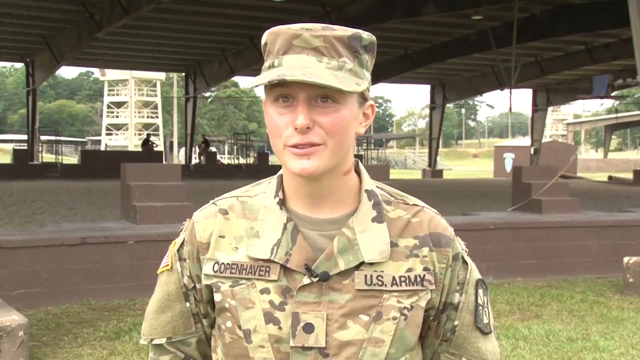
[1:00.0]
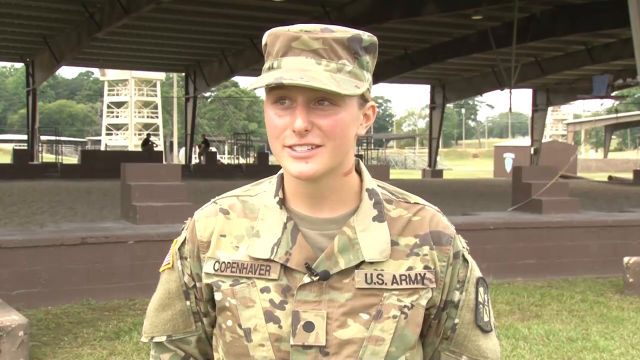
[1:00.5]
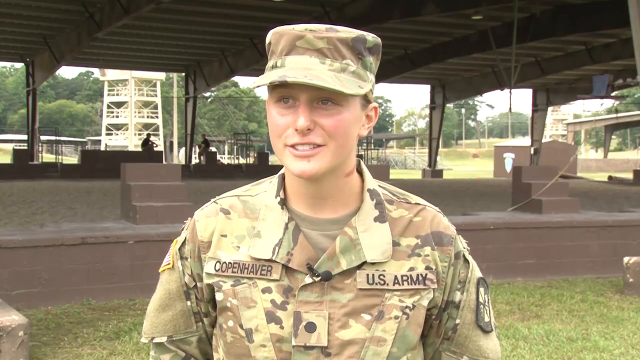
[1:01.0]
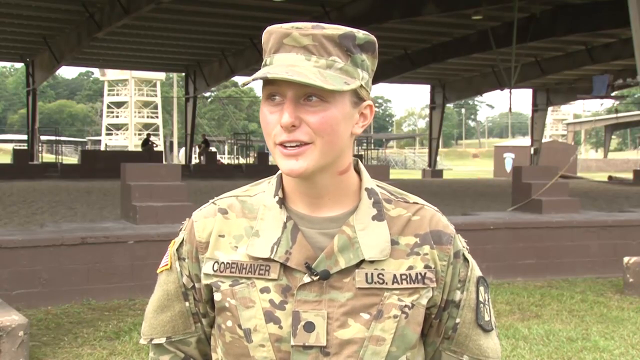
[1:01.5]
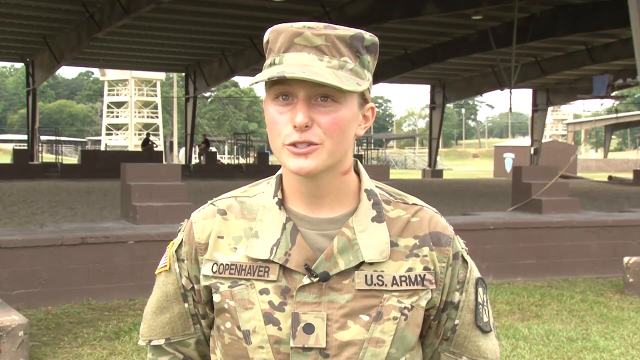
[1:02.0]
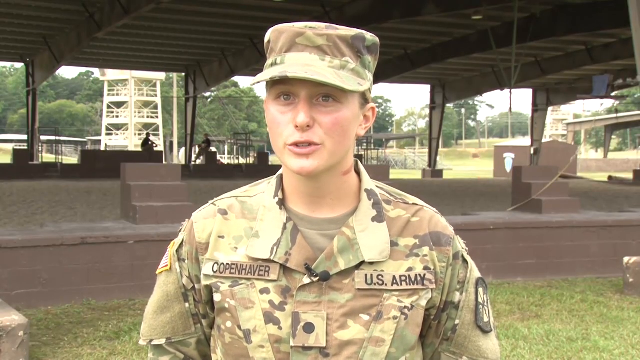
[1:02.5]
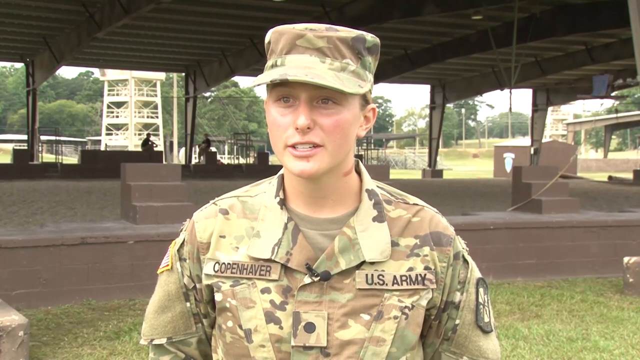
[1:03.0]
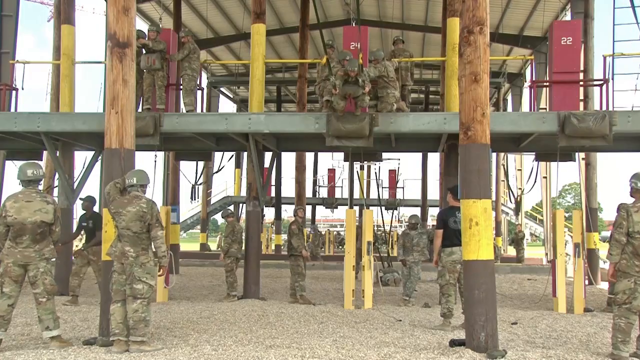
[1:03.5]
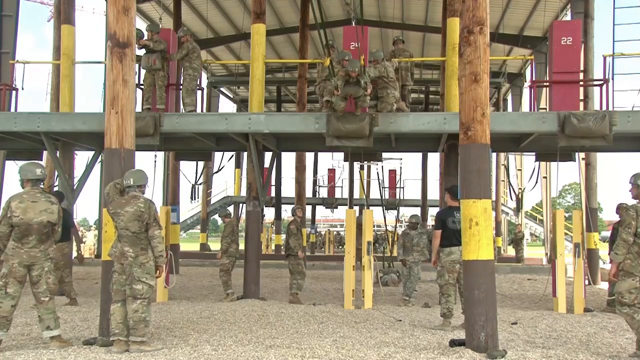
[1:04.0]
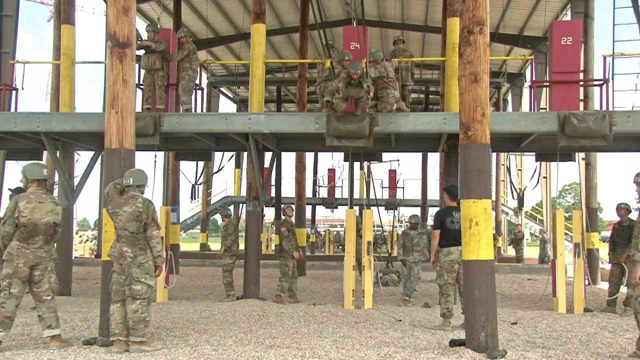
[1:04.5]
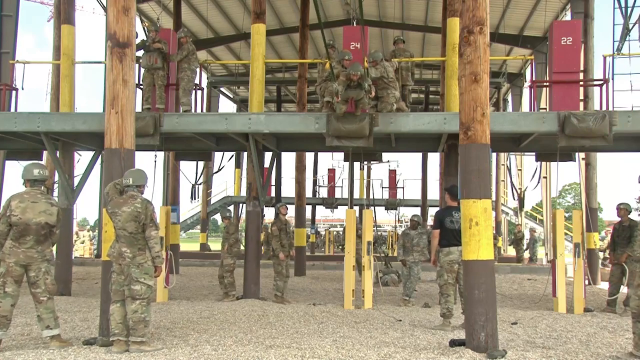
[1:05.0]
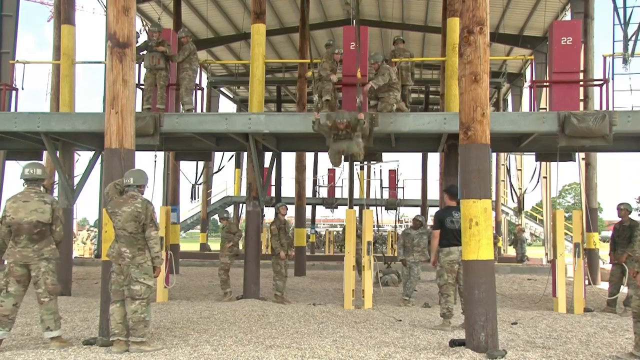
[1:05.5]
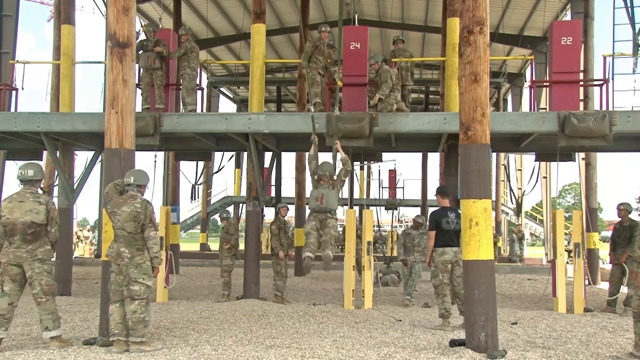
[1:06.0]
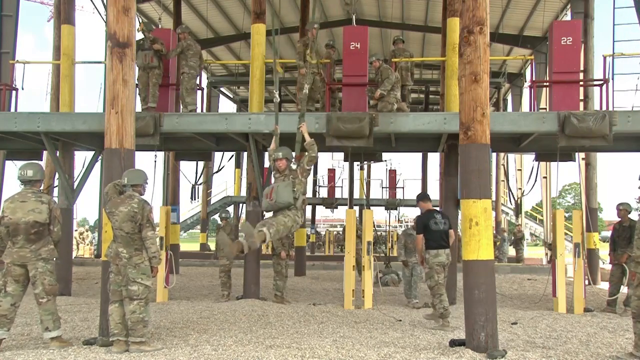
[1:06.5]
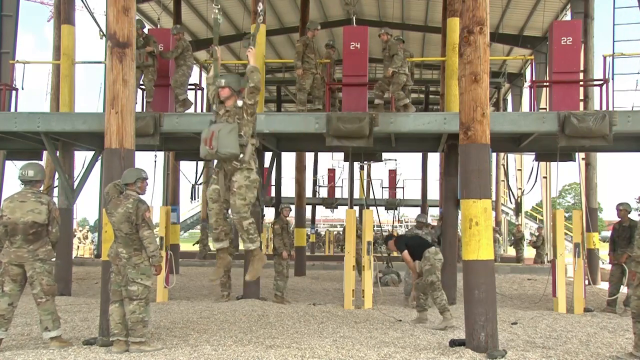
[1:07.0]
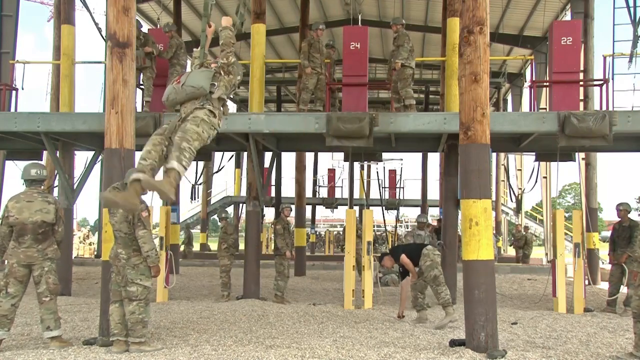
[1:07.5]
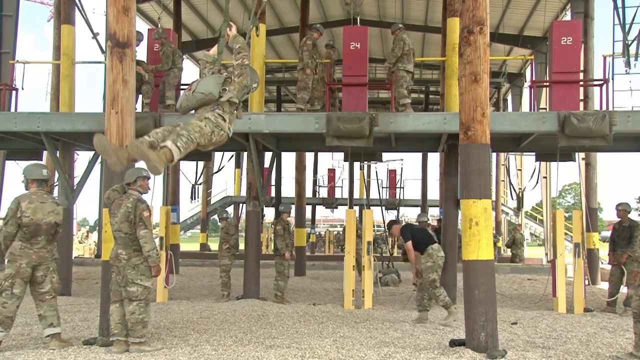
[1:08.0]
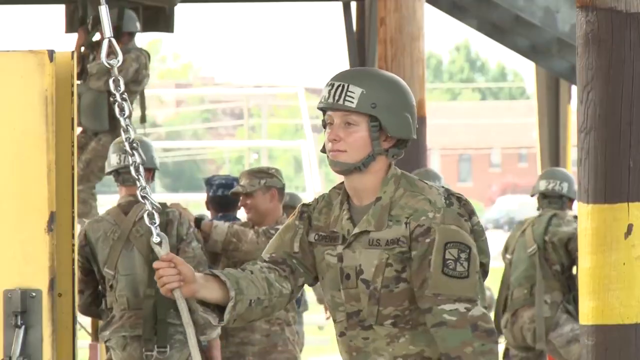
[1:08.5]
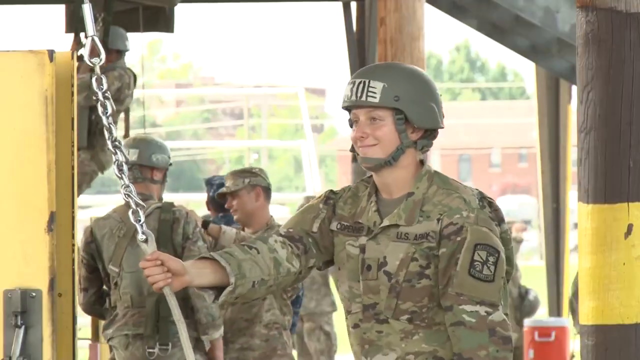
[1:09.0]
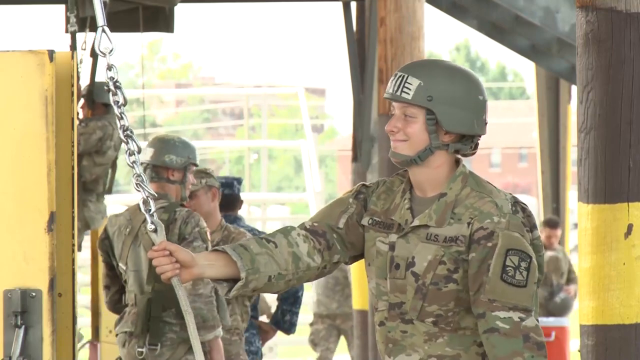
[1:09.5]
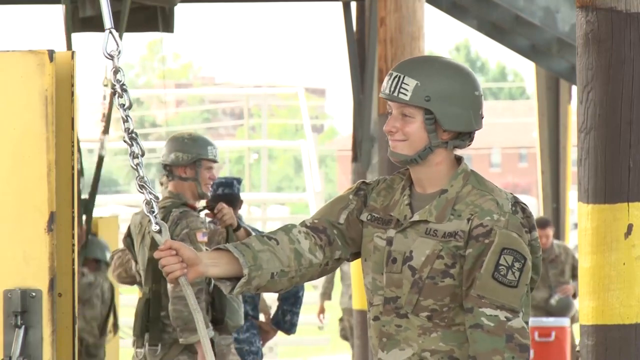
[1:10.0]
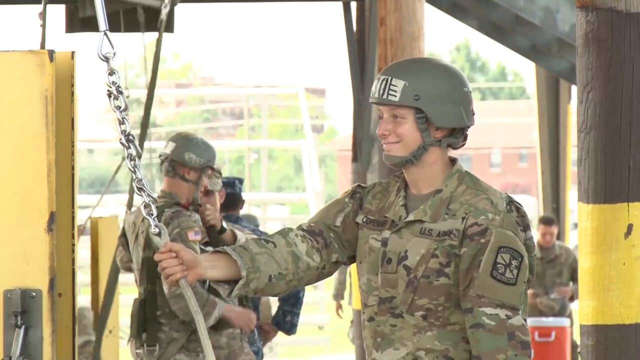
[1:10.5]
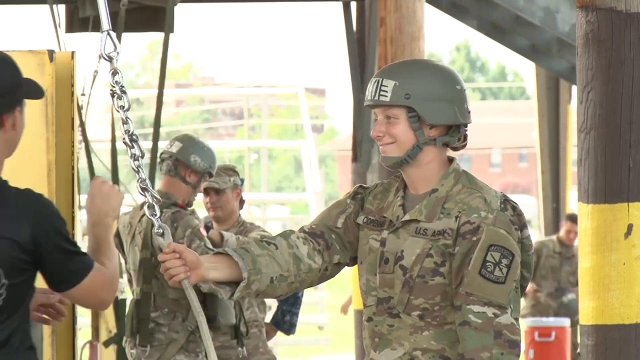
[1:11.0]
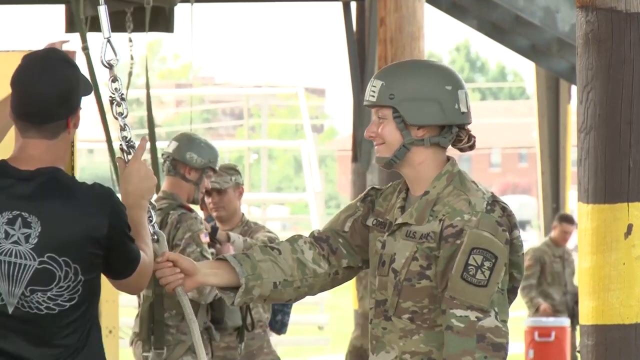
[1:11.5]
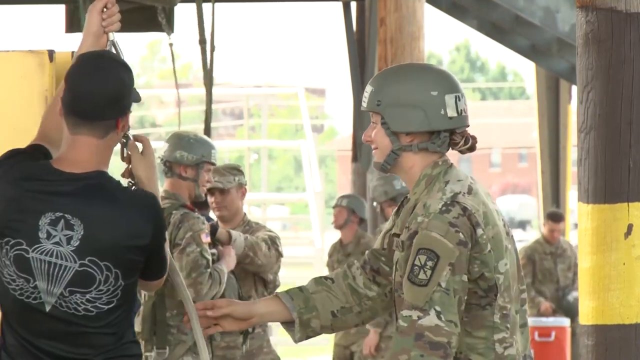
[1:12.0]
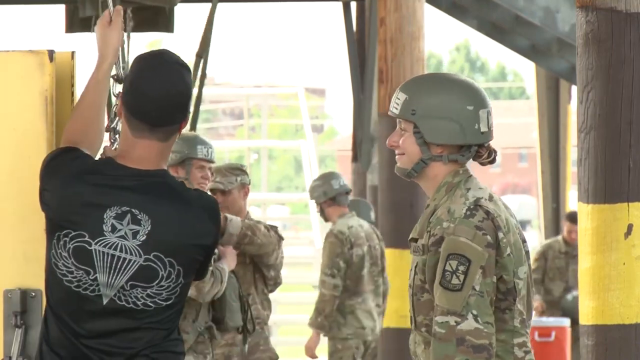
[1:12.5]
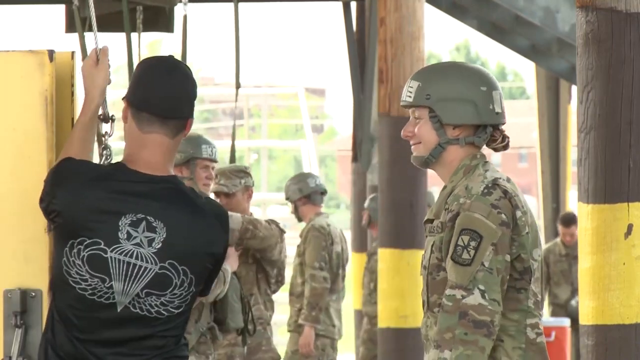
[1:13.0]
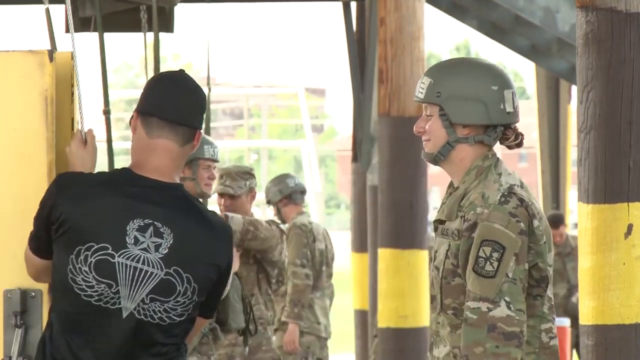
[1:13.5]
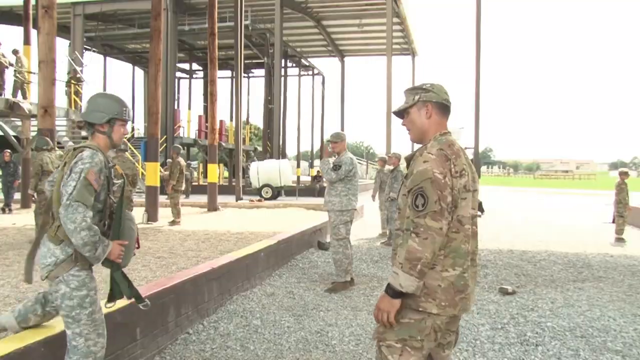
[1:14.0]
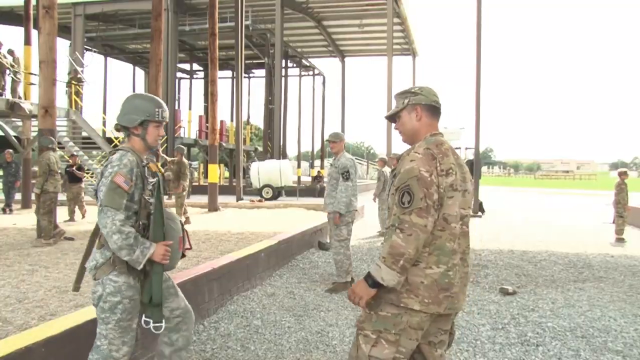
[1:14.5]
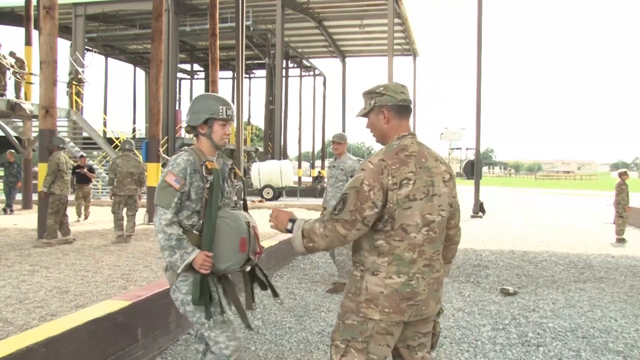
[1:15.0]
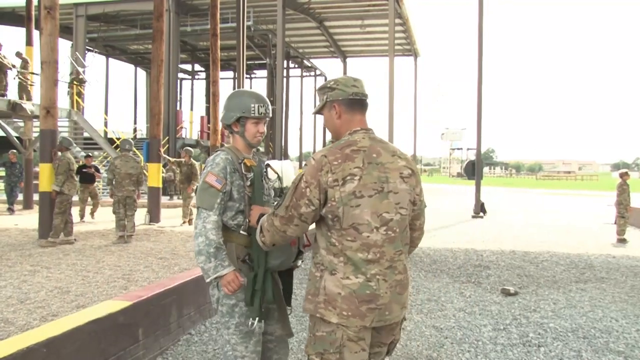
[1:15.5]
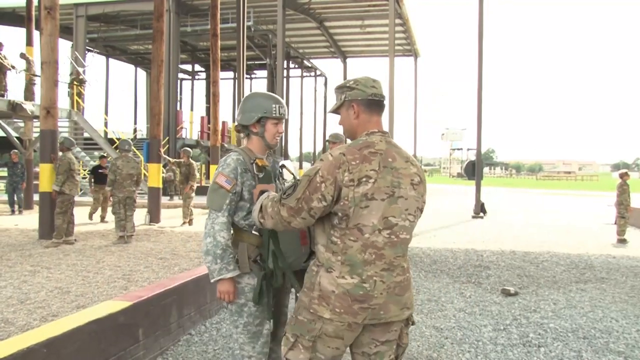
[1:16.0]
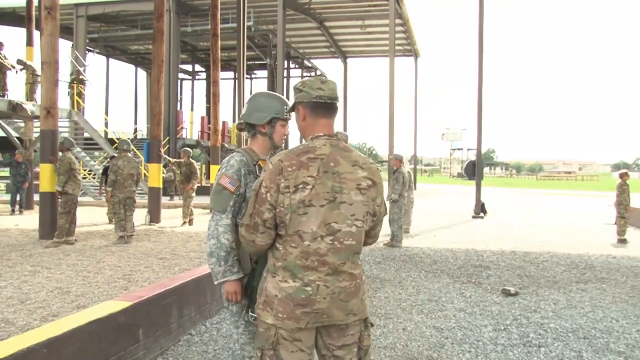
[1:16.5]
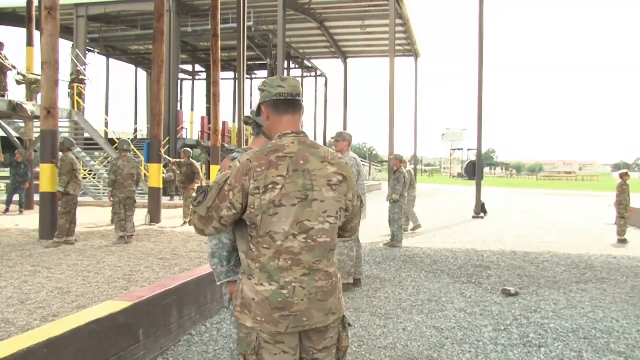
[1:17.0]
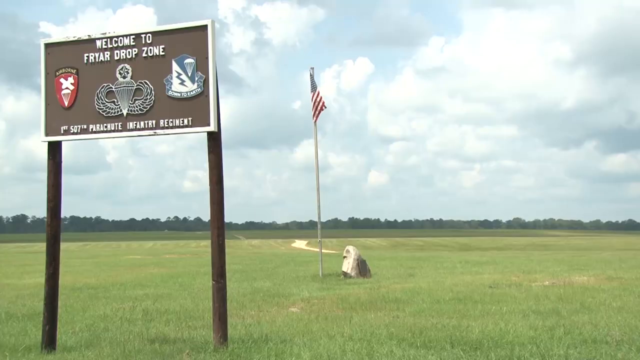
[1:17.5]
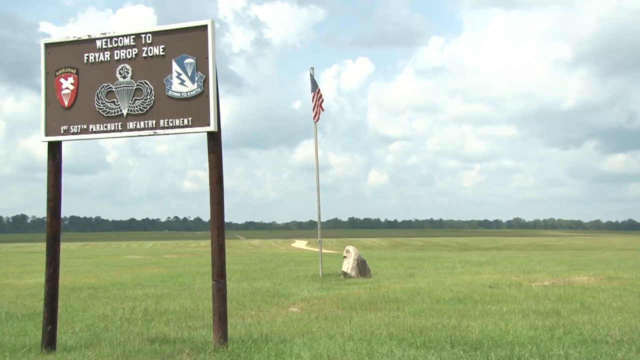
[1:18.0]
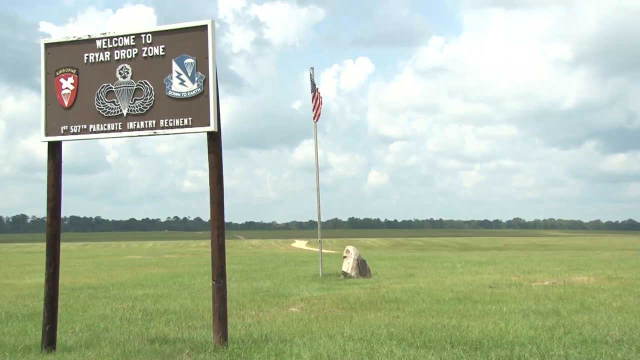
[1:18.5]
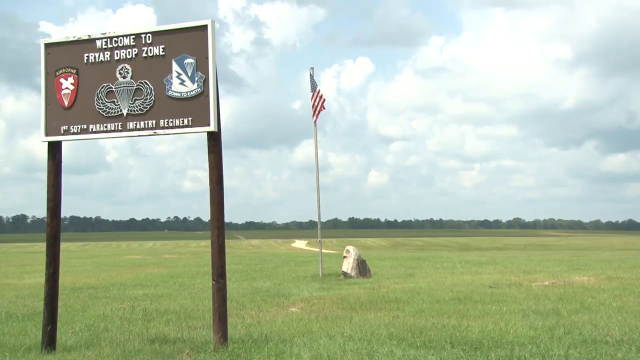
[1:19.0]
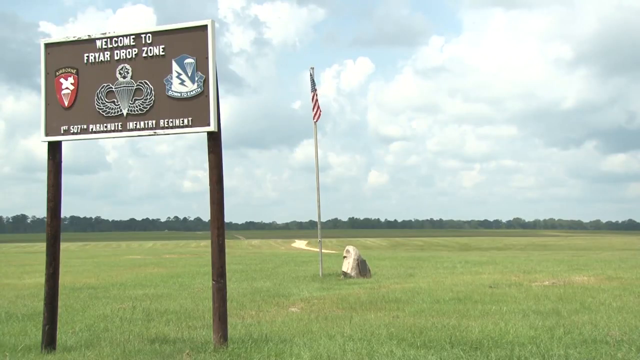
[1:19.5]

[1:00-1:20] A soldier who is apparently female wears a camouflage cover or cap and a camouflage shirt over an OD green shirt, with a United States flag patch on the right arm near the shoulder. She talks to somebody off camera. Next, cables run across from a platform above the ground, with some soldiers up there. A soldier attached to the cable jumps off, with two straps going up to the cable above him; he appears to be wearing parachute garb over his camouflage fatigues. Then another soldier in camouflage fatigues and a hard helmet holds on to something with a big silver chain attached to a swivel. This soldier is a woman with a bun at the back of her head, and she smiles at another person wearing a black short-sleeved shirt and a black cap.